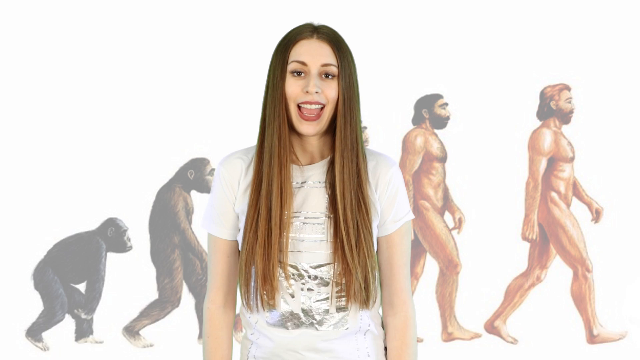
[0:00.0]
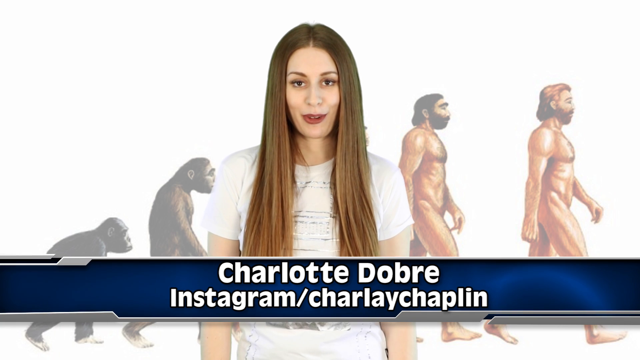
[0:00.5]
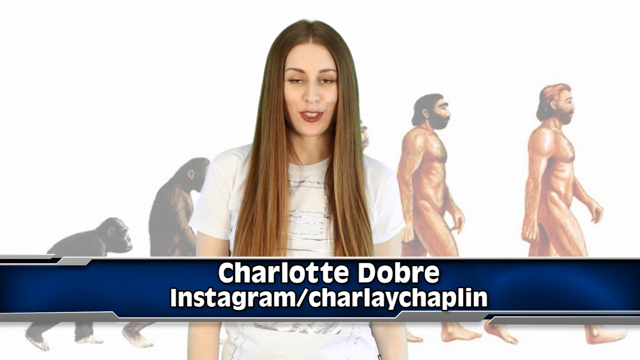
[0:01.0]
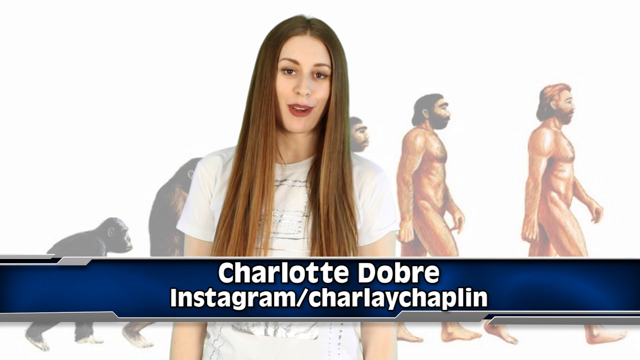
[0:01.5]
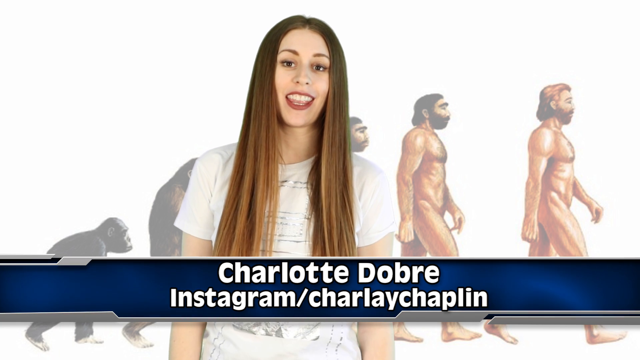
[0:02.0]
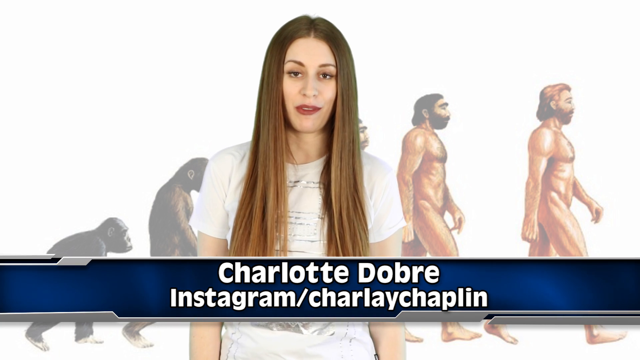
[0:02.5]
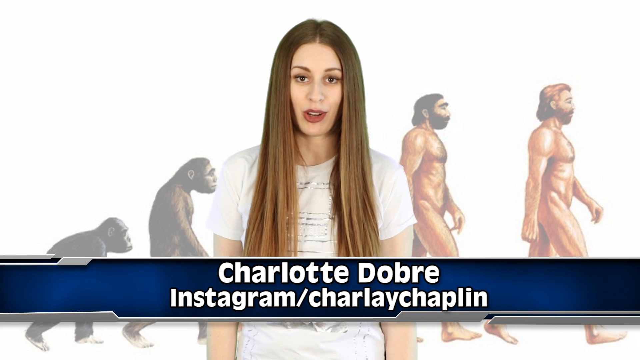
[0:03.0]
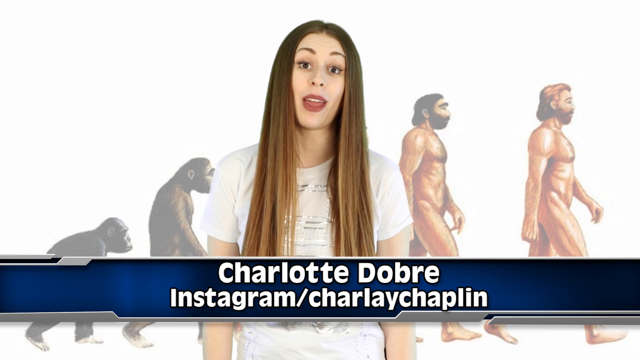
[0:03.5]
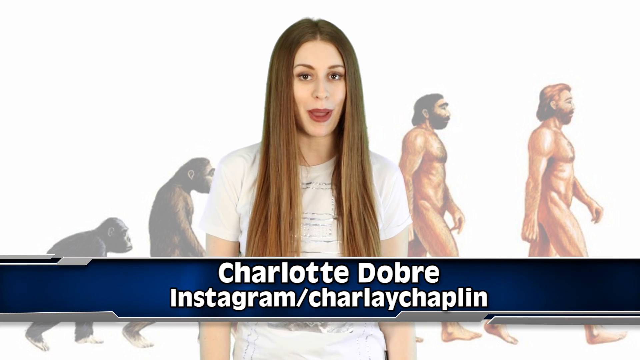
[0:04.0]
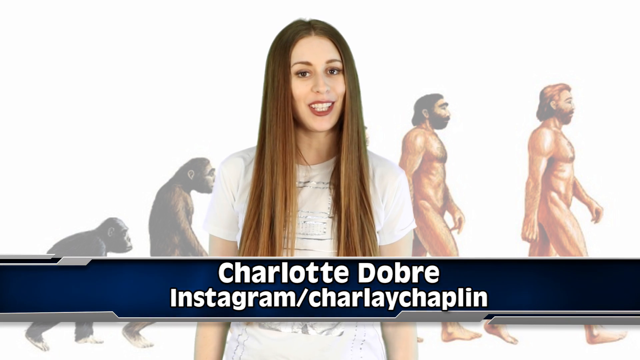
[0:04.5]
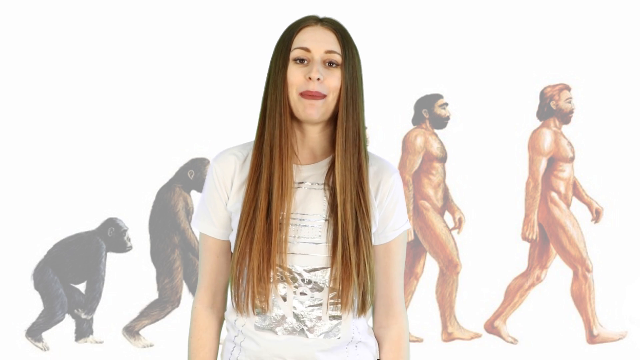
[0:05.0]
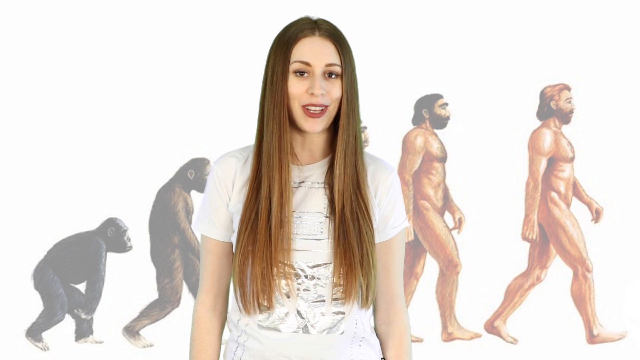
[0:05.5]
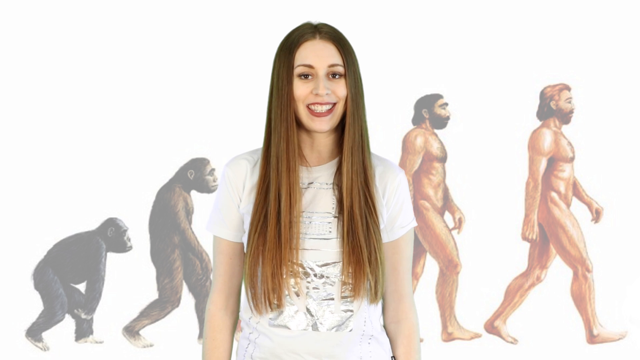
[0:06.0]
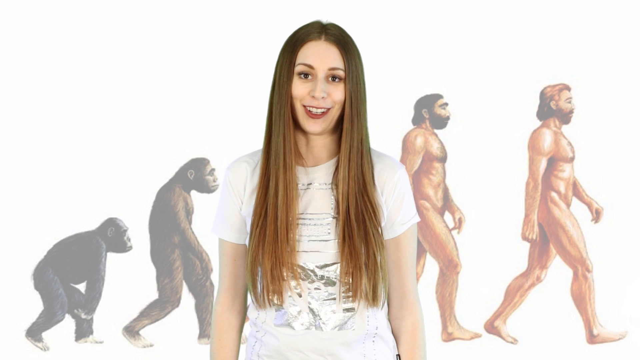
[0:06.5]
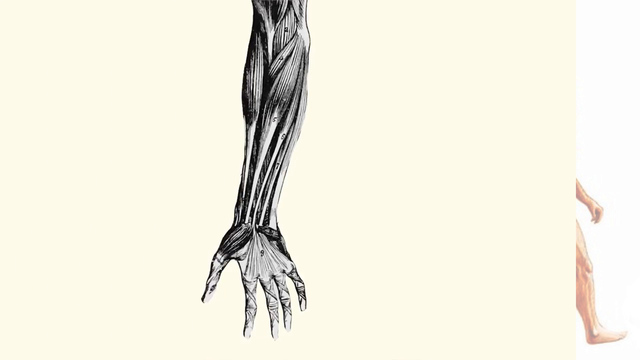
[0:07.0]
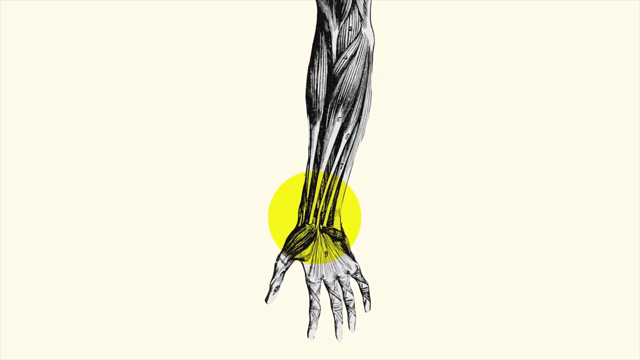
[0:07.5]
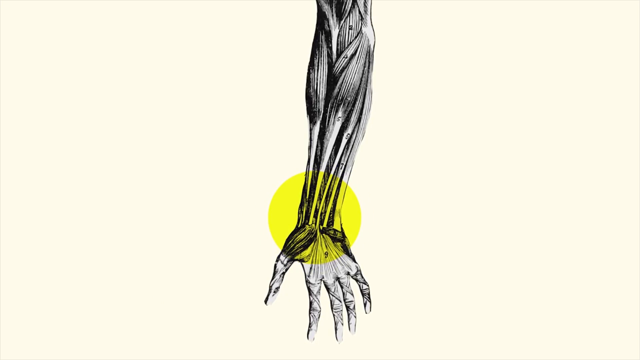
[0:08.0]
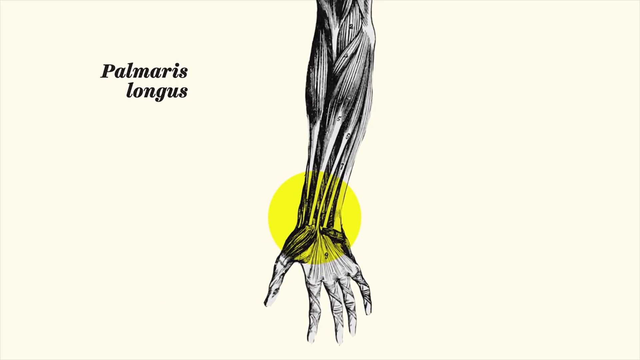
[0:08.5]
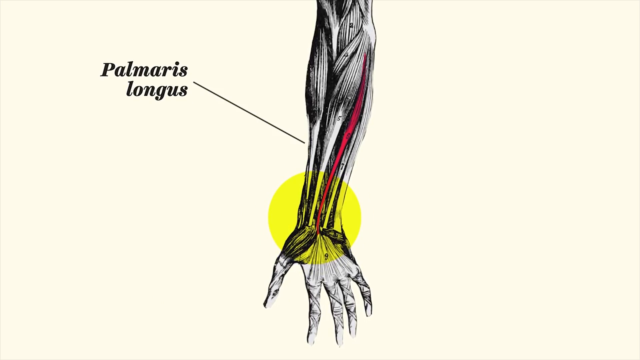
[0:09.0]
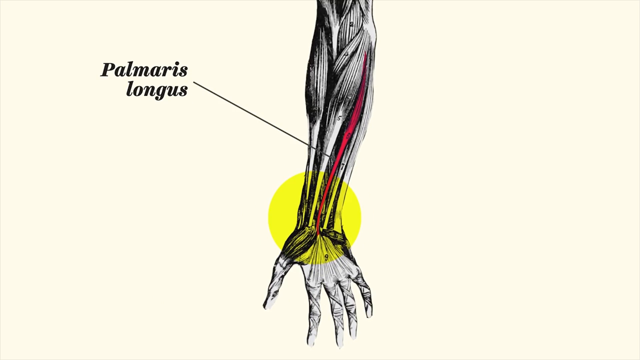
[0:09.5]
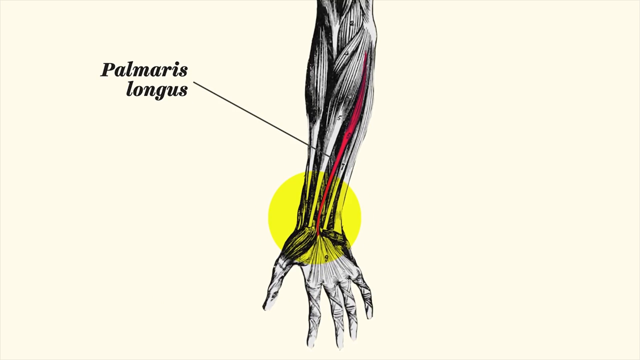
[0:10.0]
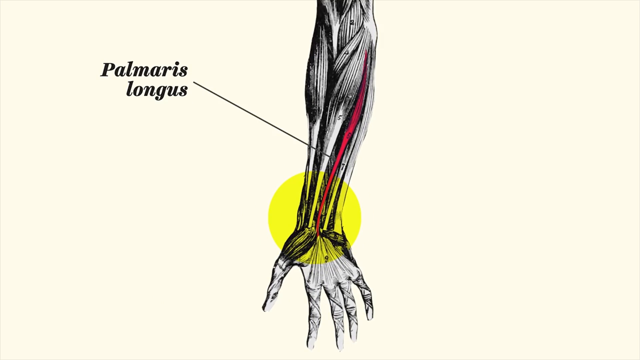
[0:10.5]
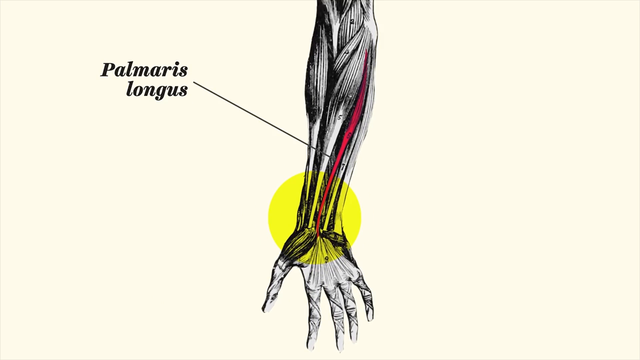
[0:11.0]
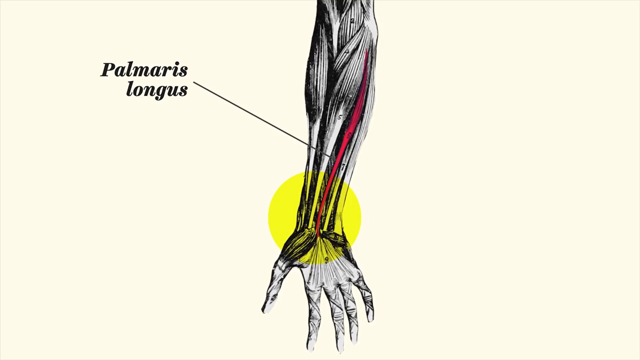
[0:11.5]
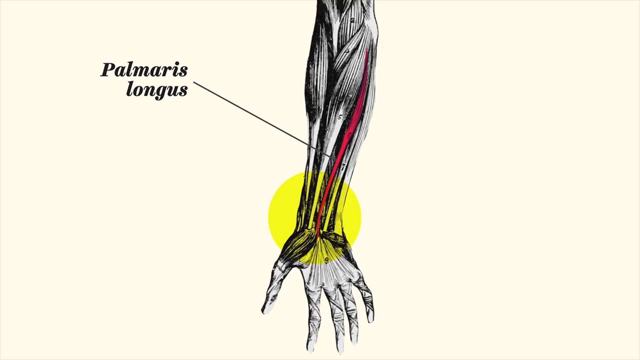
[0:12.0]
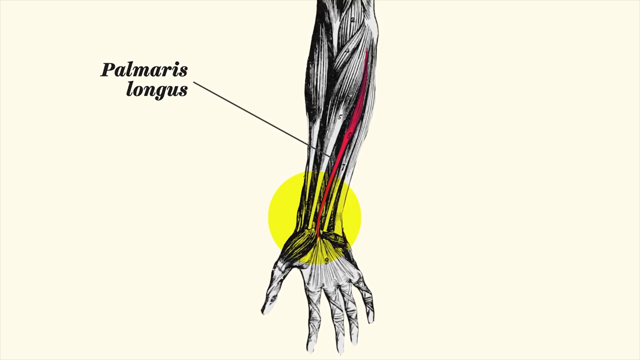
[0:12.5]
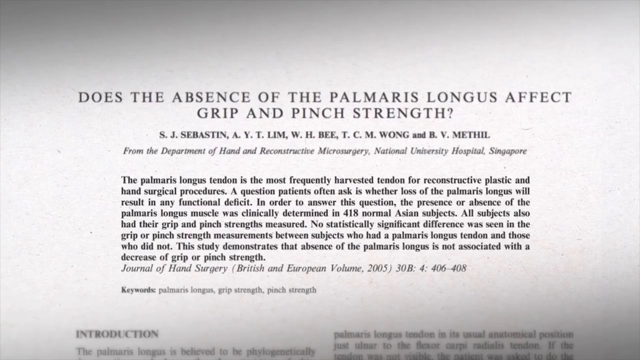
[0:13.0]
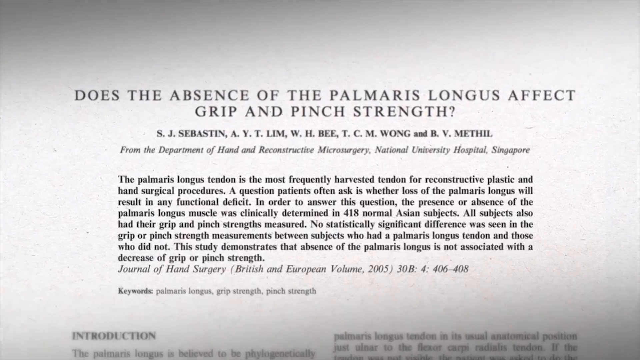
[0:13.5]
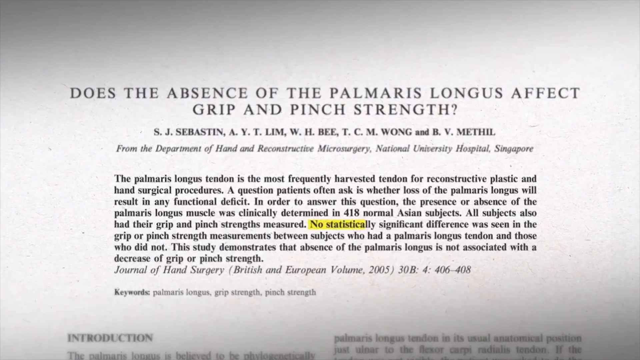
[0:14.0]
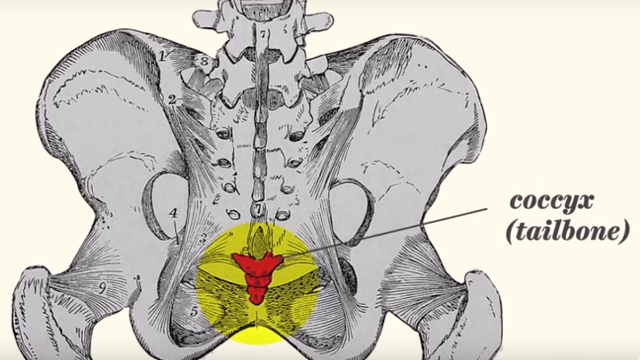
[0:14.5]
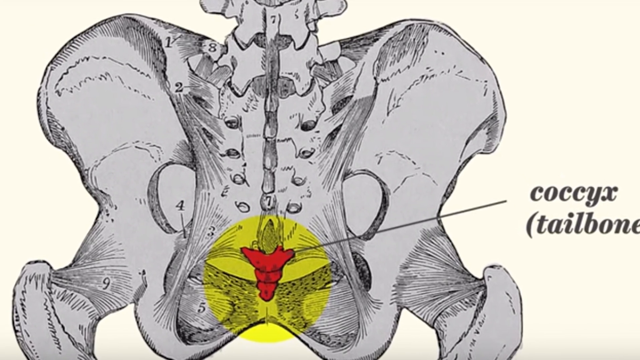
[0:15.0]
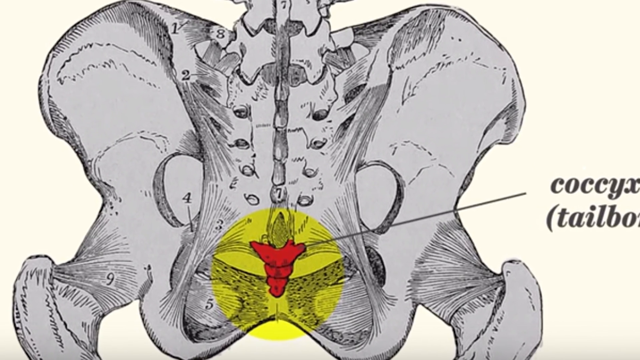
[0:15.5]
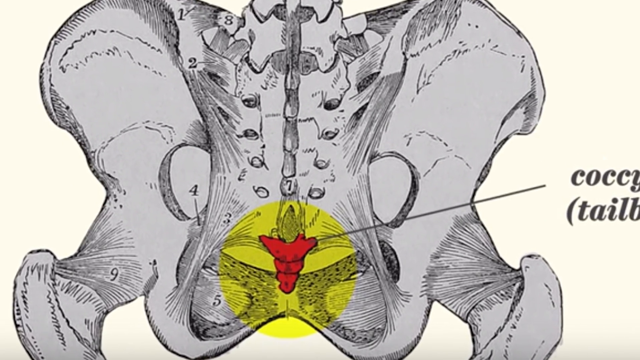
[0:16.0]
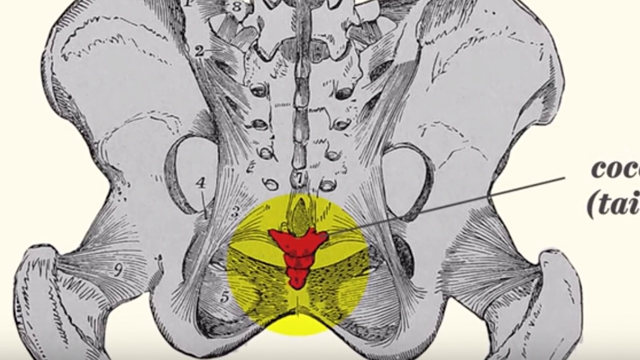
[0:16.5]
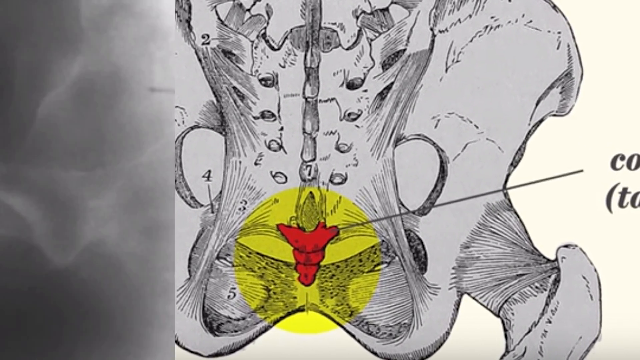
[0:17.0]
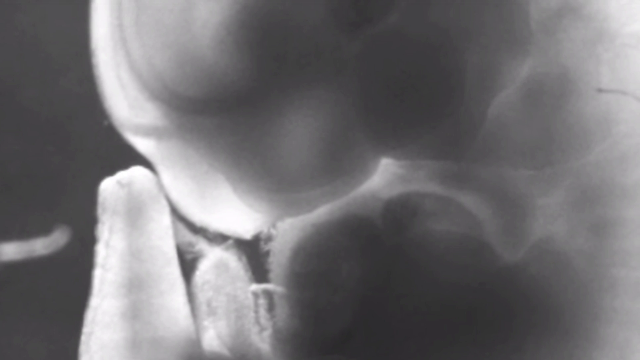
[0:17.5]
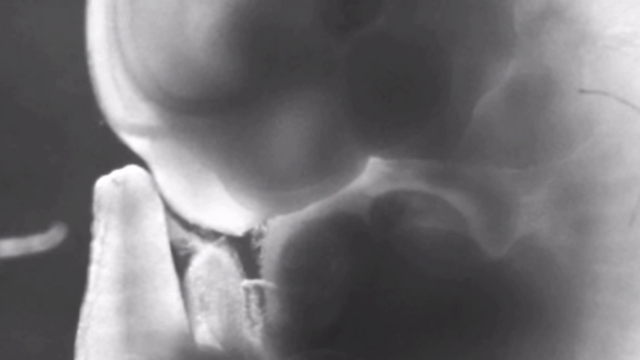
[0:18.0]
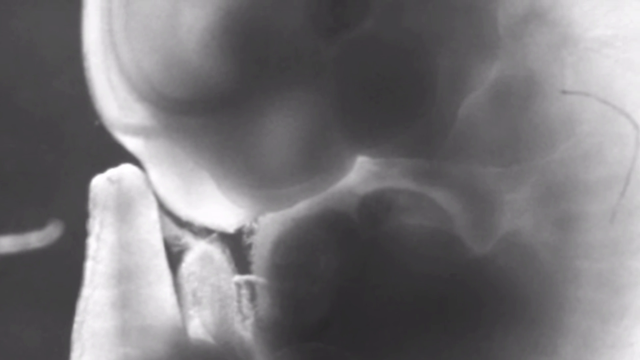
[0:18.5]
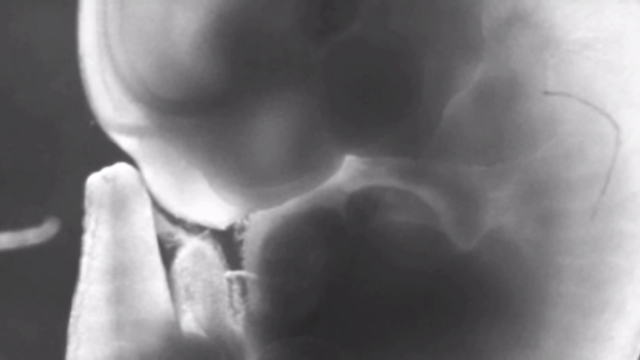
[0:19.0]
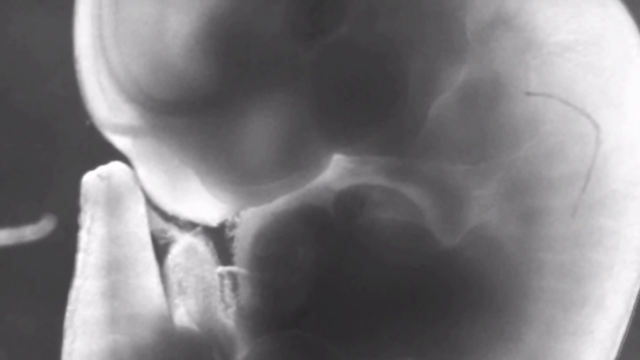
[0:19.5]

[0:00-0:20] An overlay image of a woman with long blonde hair appears, with a banner at the bottom that reads "charlotte dobre instagram / charley chaplin". In the background is an animation of an evolutionary image showing a primate on the left and a human on the right, with transitioning species in between. She smiles at the camera before the screen transitions to a dorsal view of the left hand and its anatomical muscles and tendons, with one muscle highlighted in red, a yellow circle around it, and the label "palmaris longus". A research article is then shown, its title reading "the absence of the palmaris longus affect grip and pinch strength?" Next comes an x-ray image illustration of the hip, with the coccyx, or tailbone, highlighted in red with a yellow highlight surrounding it and the label "coccyx (tailbone)". An x-ray is then shown zooming out before the video transitions back to Charlotte.